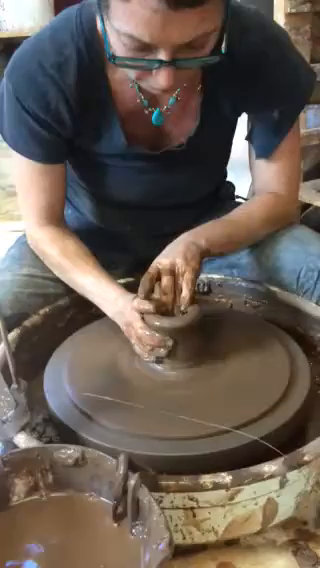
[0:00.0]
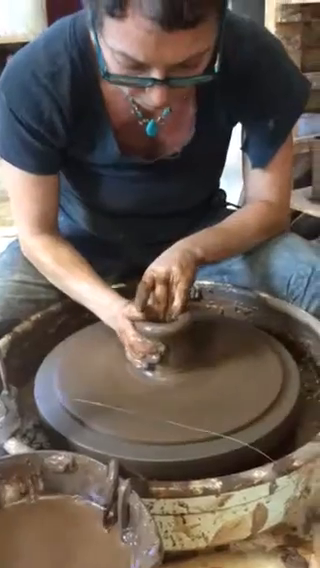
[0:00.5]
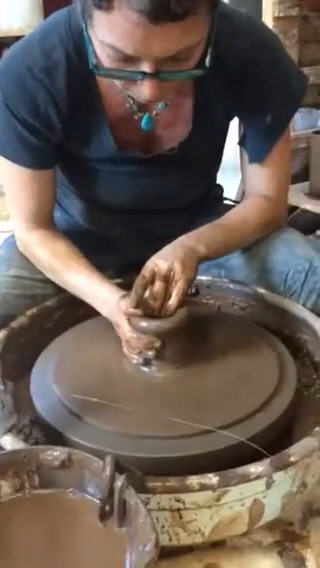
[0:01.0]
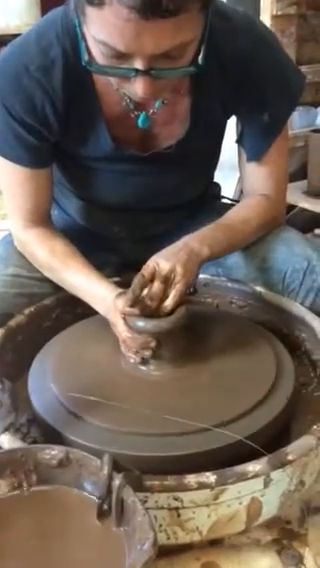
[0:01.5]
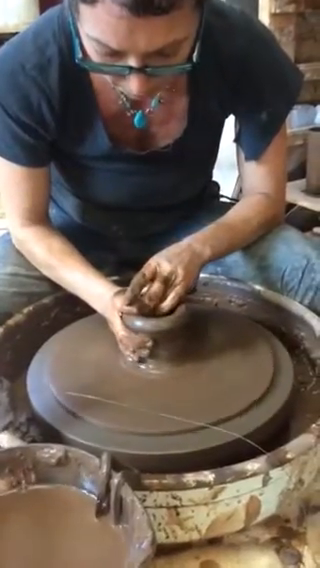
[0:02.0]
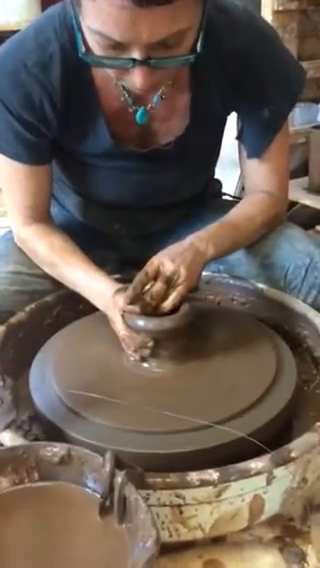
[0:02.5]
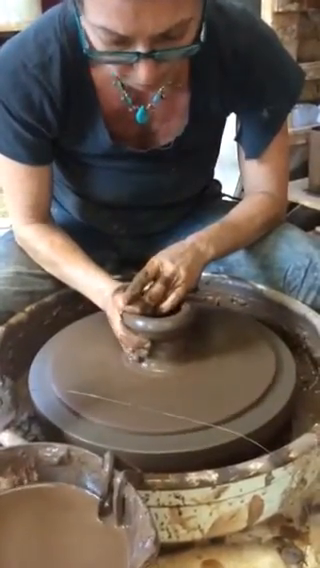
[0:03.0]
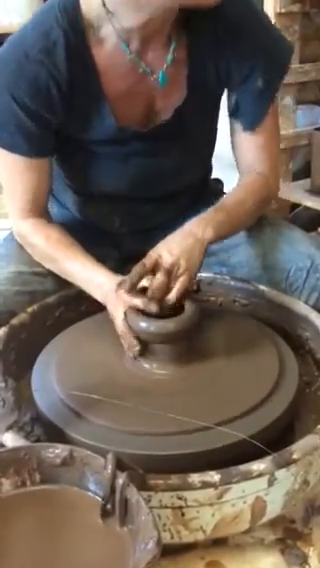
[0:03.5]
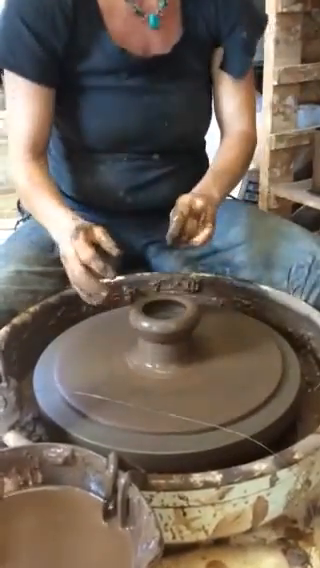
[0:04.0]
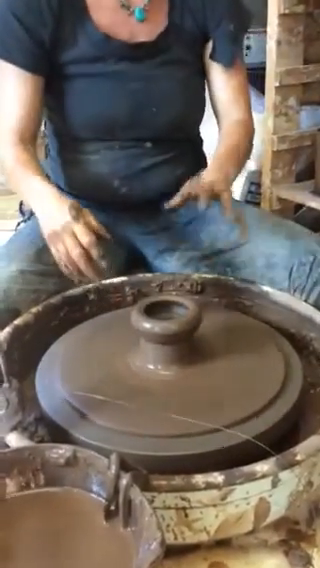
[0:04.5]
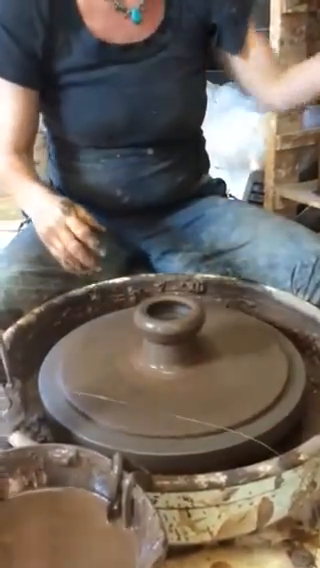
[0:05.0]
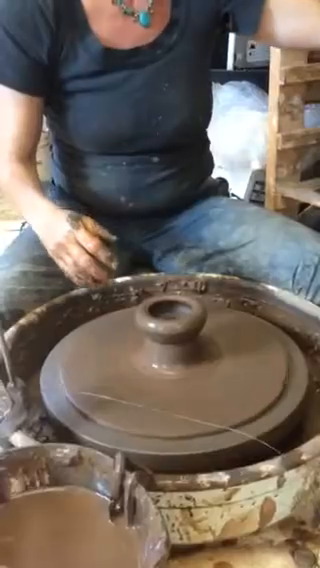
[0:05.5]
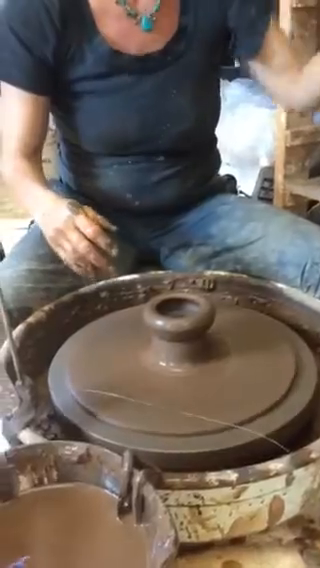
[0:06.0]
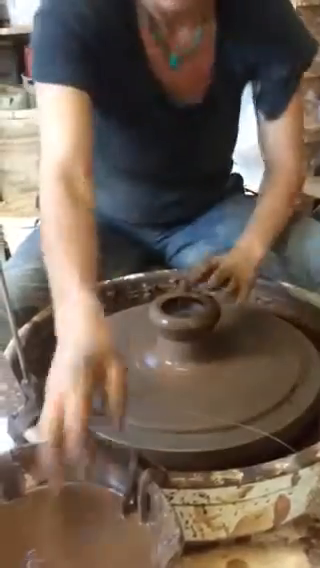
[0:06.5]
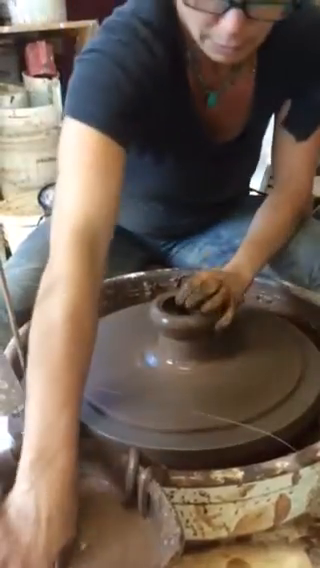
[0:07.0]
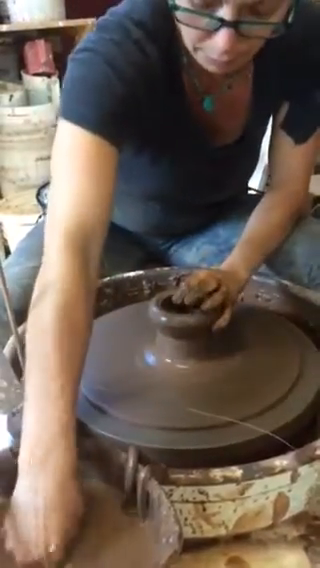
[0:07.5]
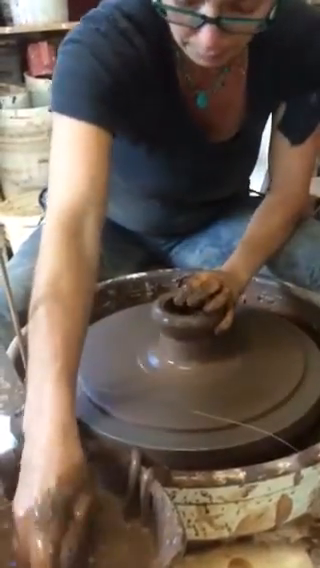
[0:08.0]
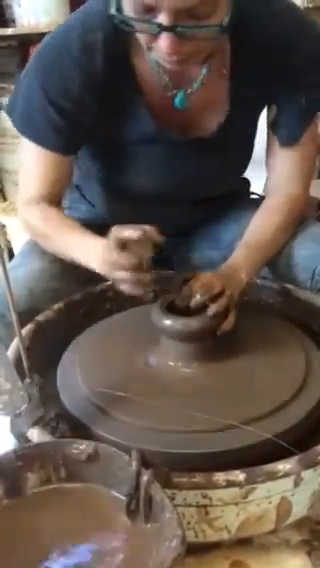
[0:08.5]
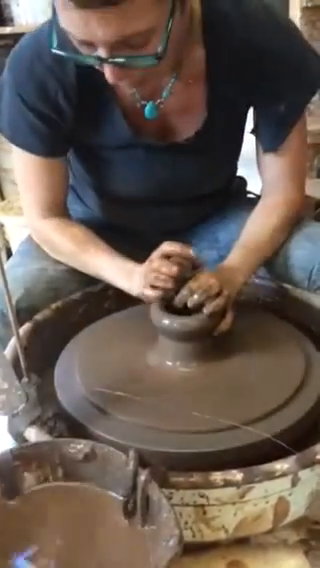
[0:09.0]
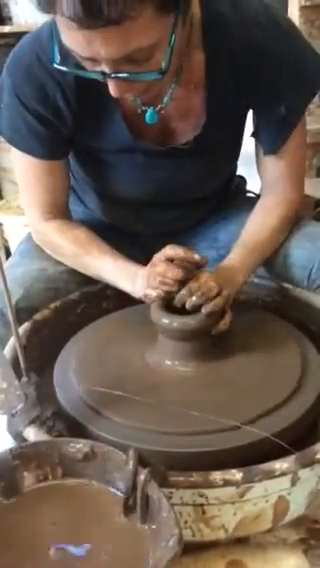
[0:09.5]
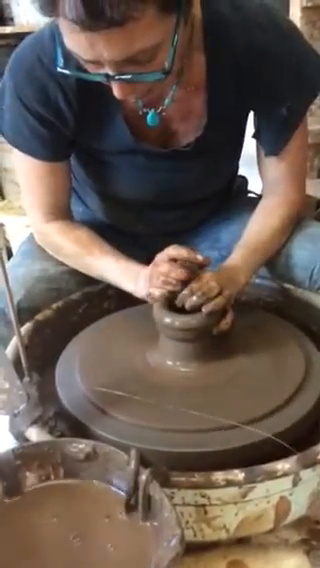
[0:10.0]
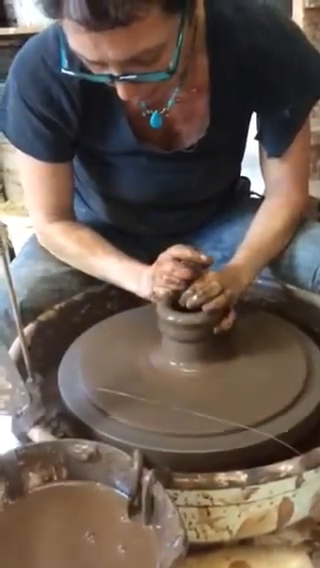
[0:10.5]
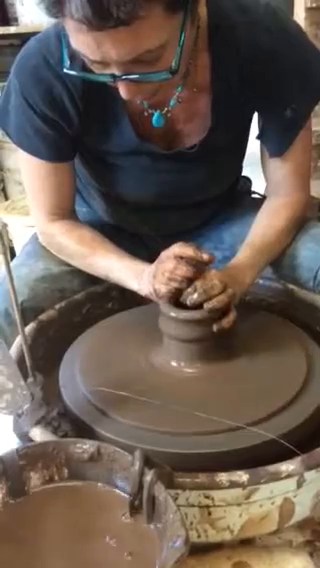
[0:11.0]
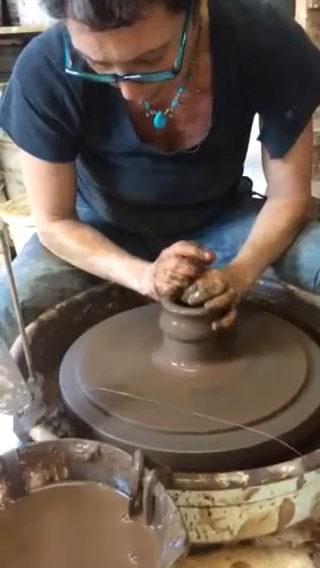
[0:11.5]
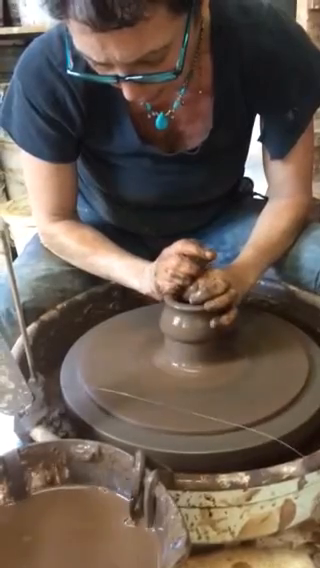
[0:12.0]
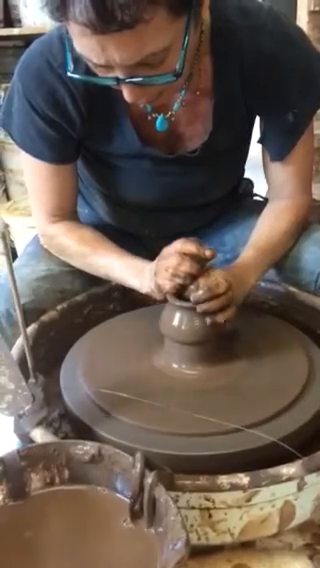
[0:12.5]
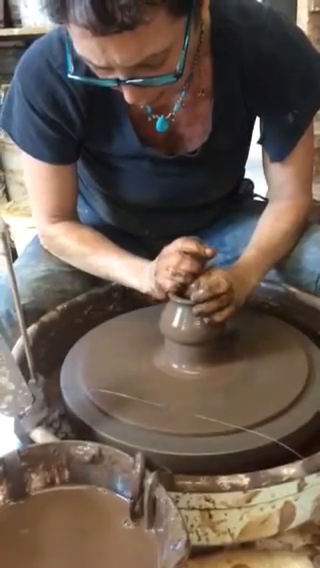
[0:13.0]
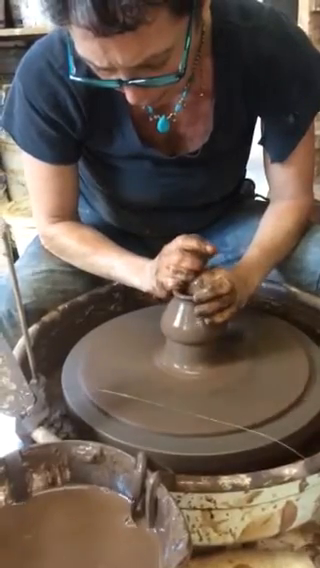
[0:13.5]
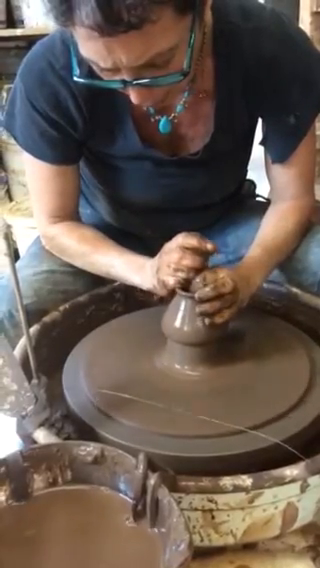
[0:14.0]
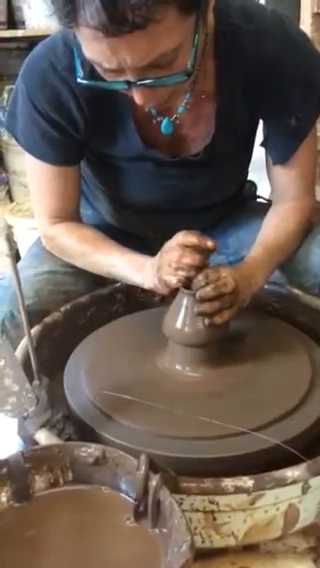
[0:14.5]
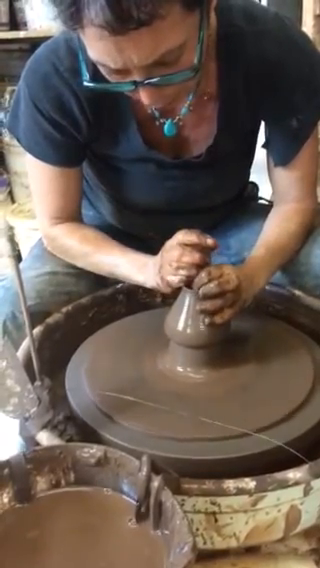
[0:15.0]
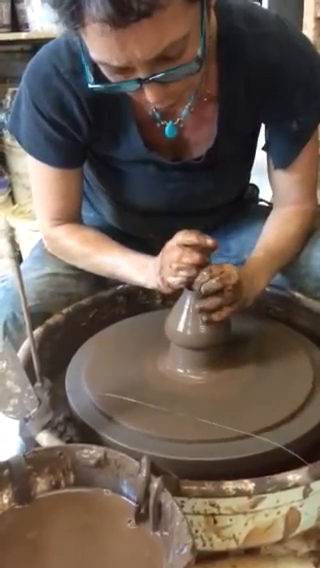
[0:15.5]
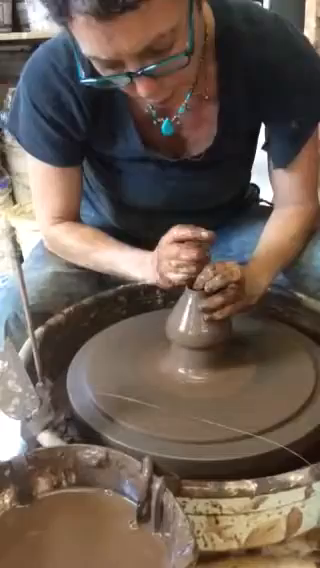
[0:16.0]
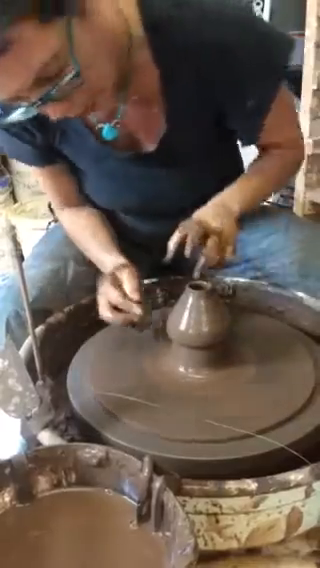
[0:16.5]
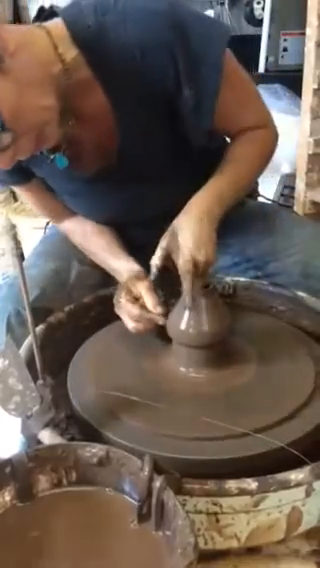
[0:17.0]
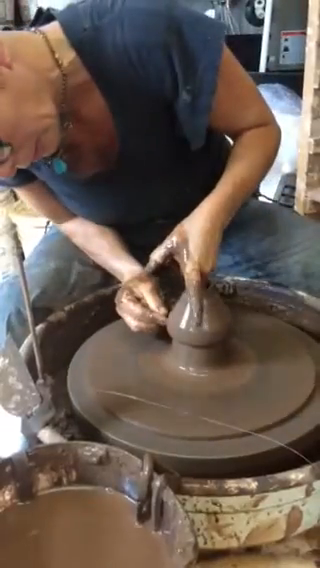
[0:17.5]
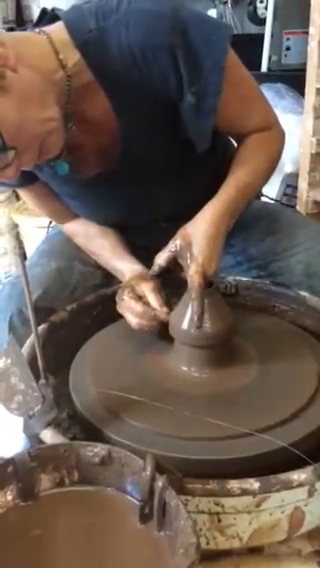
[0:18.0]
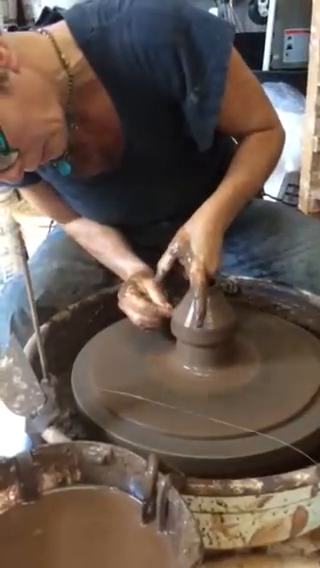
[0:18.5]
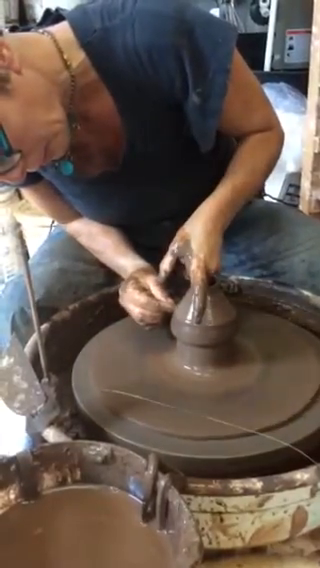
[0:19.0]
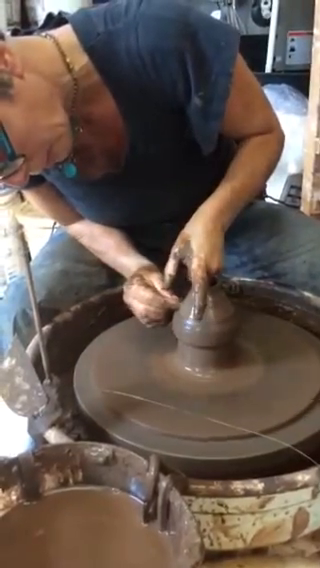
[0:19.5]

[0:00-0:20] A woman spins something on a pottery wheel, intently forming shapes into the clay as the wheel turns. She wears a blue shirt, denim jeans, turquoise bead jewelry around her neck, and blue glasses, and her hair is brunette. Leaning forward, she forms the clay into shape, reaches over into a bowl of water, and continues making the pottery. As she builds up the sides of the item on the wheel, she seems to be explaining something to someone. It is a demonstration of pottery, and she is most likely a teacher in a pottery class. The background suggests a studio of some sort, with items for making clay visible in the background.